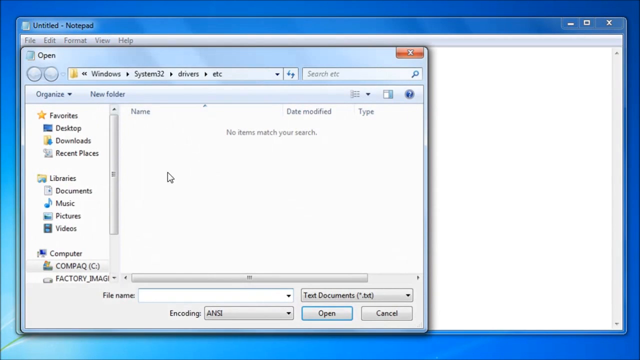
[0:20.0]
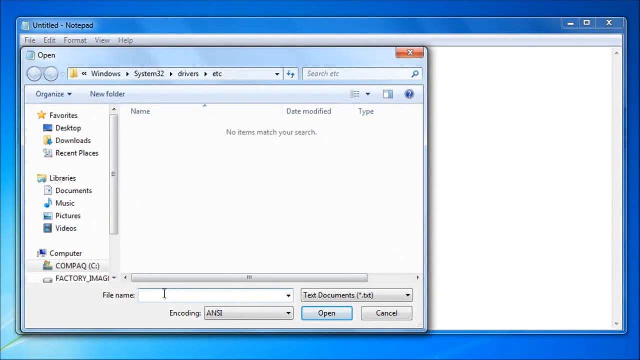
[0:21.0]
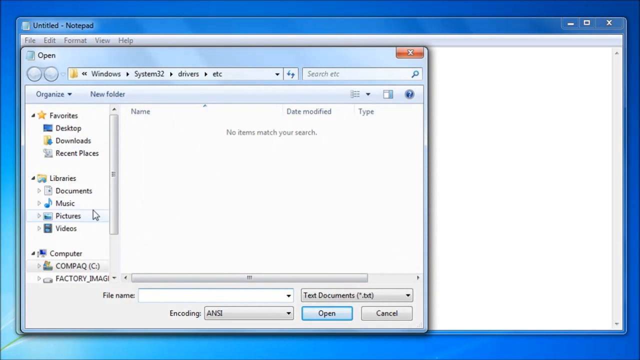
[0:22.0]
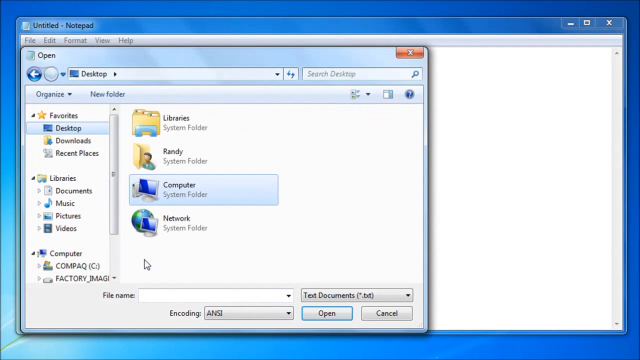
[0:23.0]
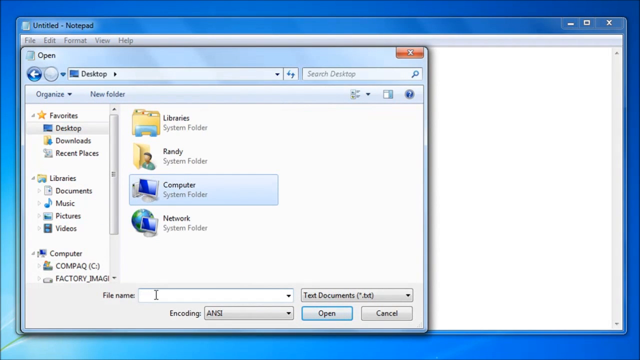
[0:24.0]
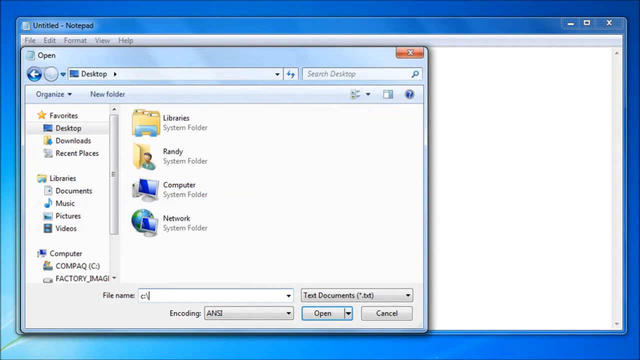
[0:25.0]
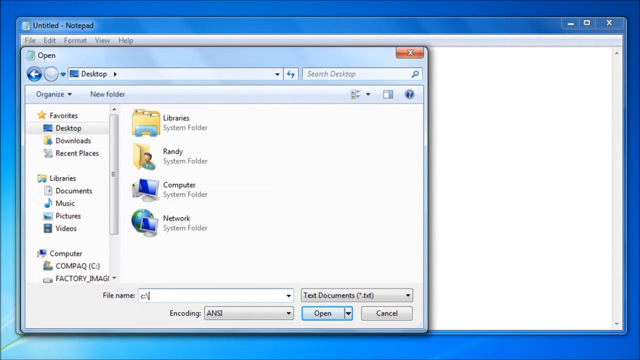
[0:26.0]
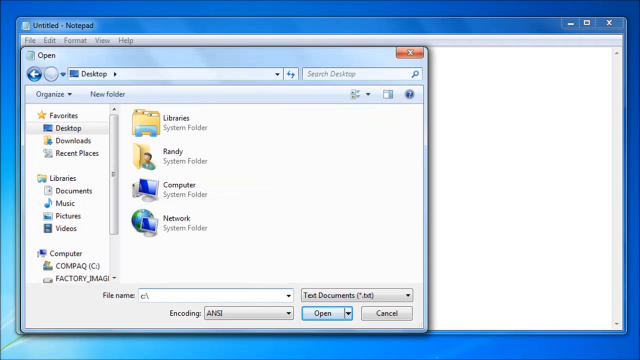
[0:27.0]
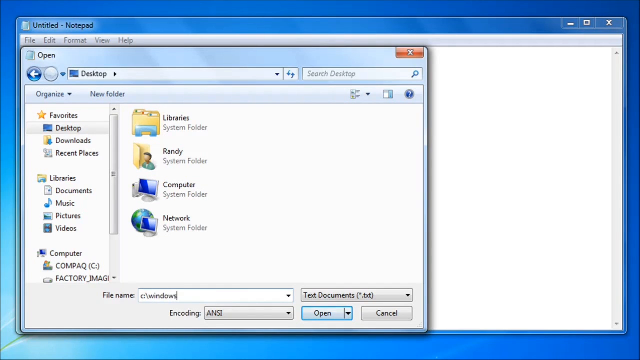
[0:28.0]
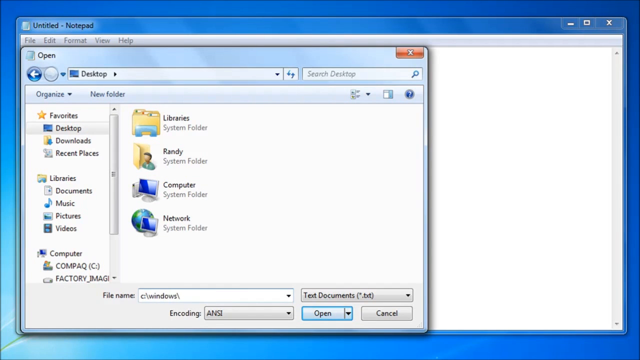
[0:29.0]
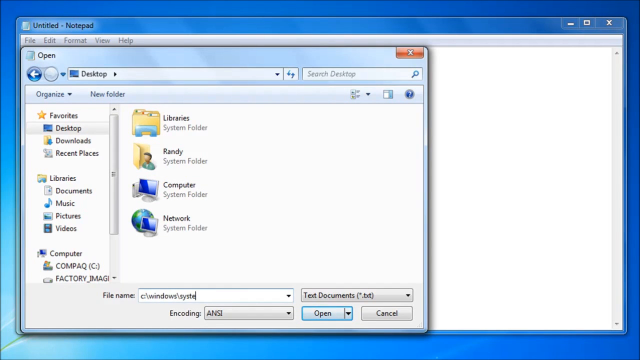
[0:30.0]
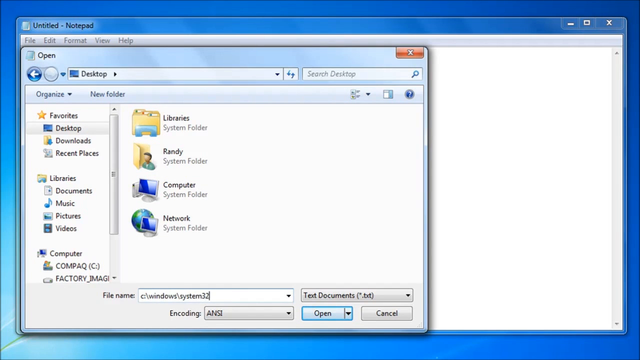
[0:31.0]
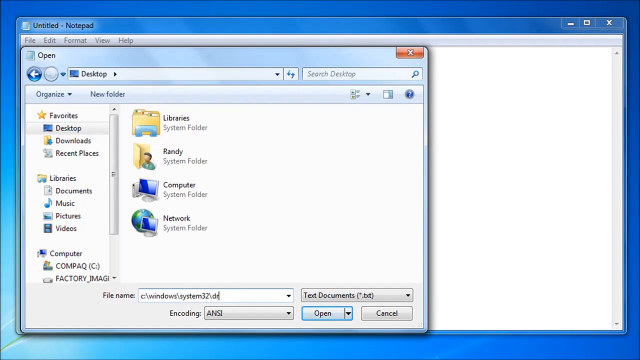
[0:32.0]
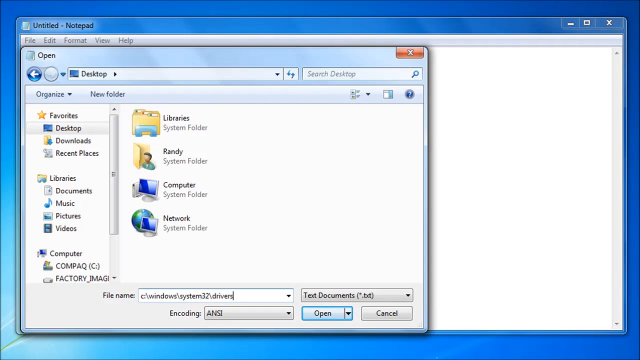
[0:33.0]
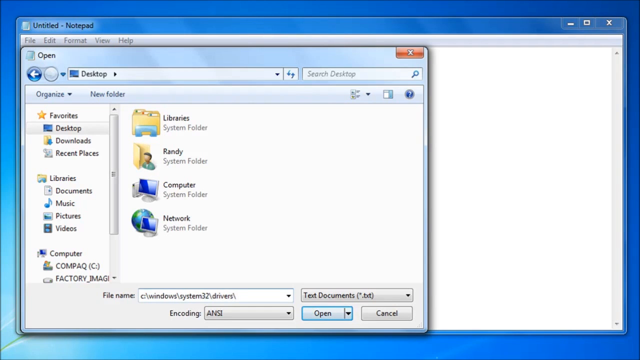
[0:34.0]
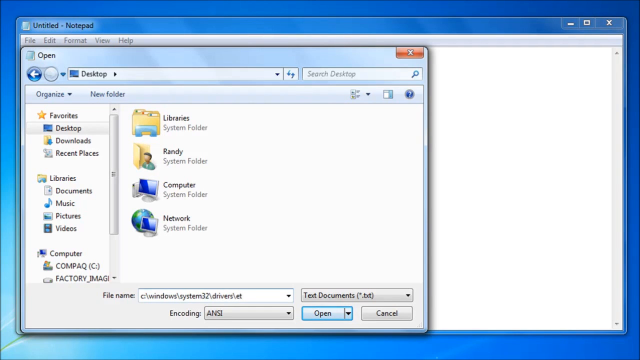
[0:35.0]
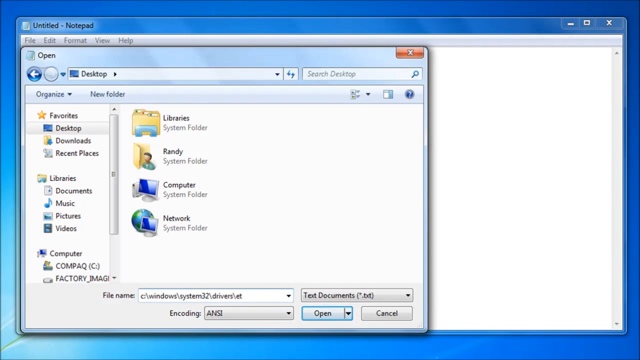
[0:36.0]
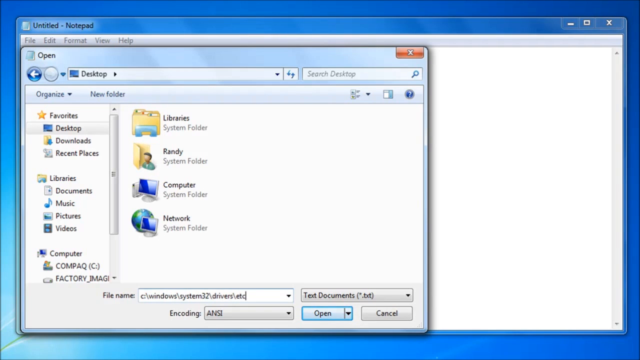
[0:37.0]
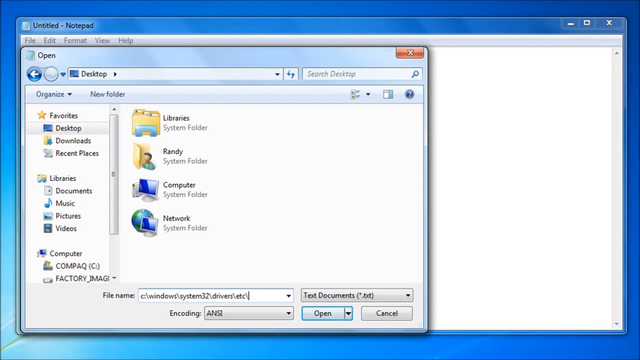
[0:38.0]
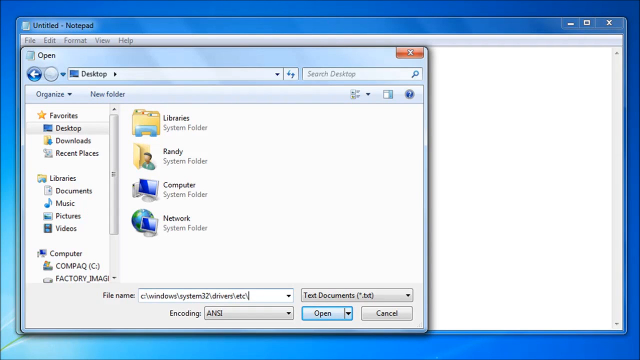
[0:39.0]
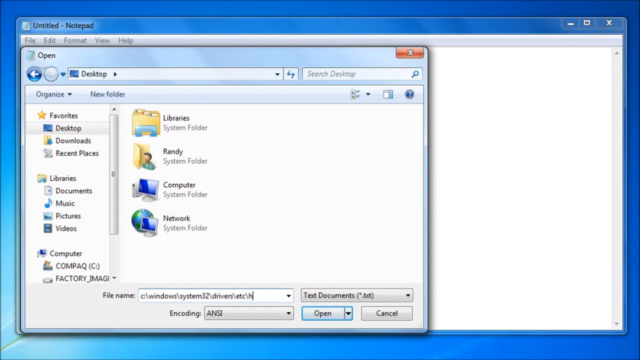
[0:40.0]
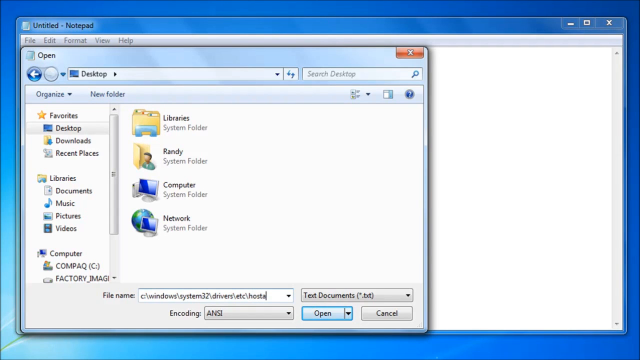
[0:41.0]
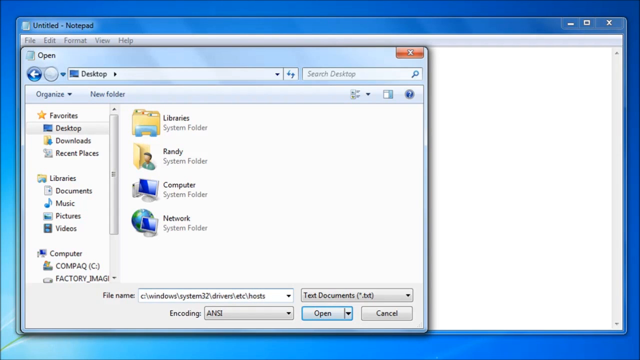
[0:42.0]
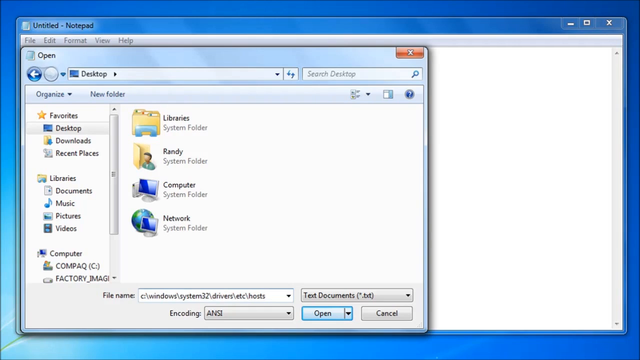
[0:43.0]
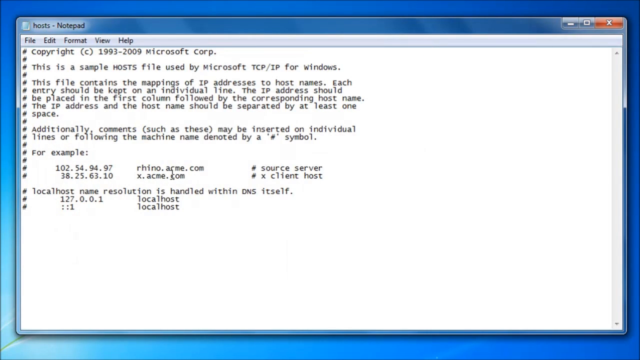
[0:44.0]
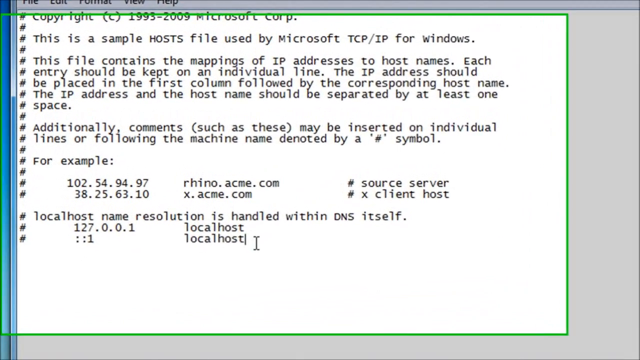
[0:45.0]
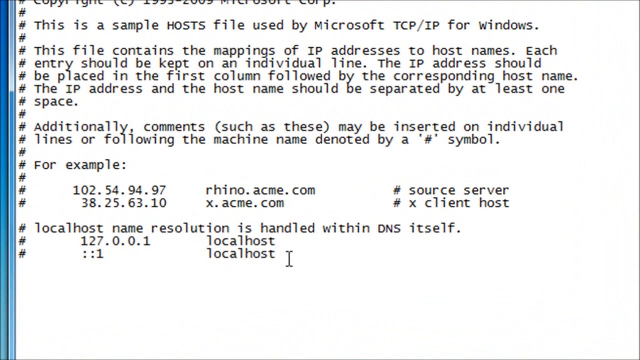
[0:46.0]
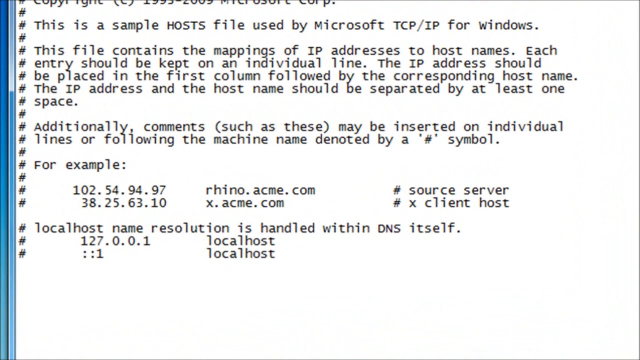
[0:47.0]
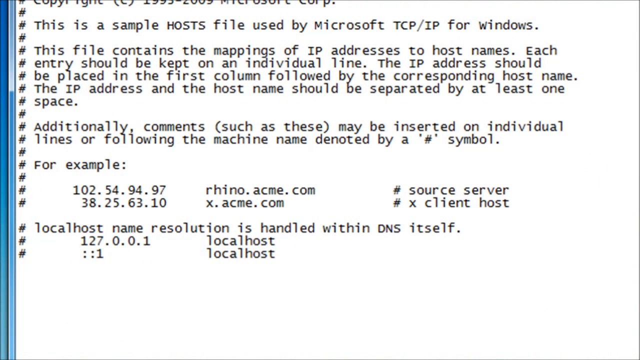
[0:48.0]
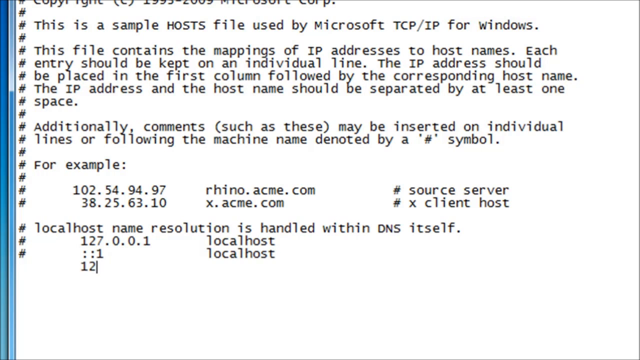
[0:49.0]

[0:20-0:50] A file is opened from the desktop, and the file name field shows "windows/system 32/drivers/etc/hosts". The hosts file opens, showing copyright text and sample contents, including "each entry should be kept on an individual line", "the IP address should be placed in the first column followed by the corresponding local host name", "the IP address and the host name should be separated by at least one space", "local host name resolution is handled within DNS itself" and "127.0.0.1 local host".